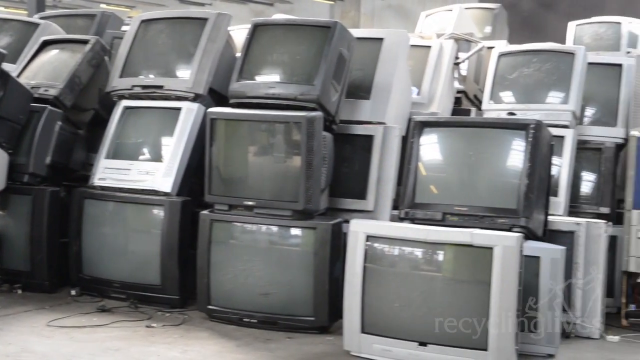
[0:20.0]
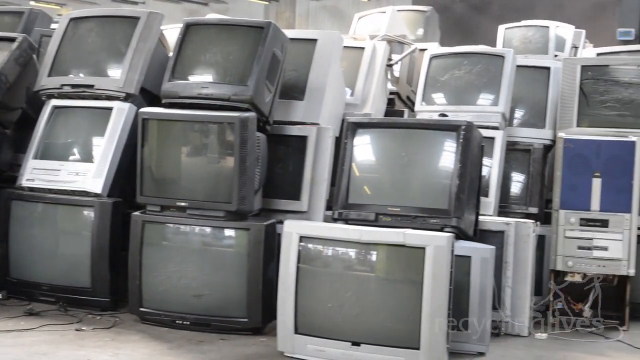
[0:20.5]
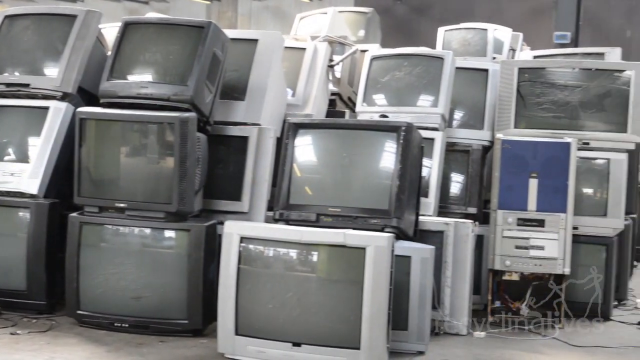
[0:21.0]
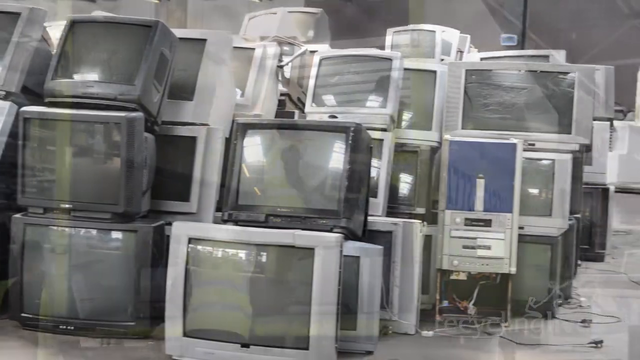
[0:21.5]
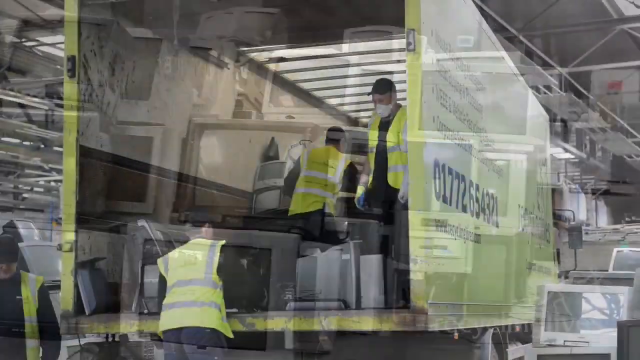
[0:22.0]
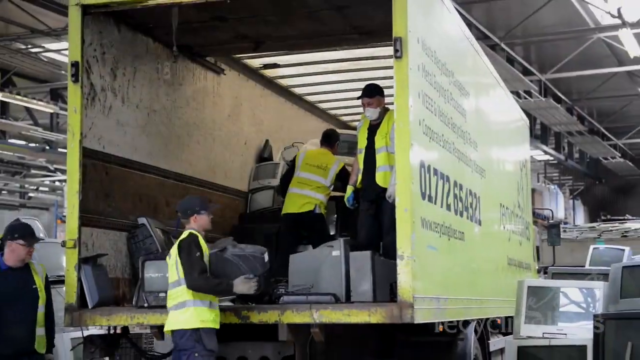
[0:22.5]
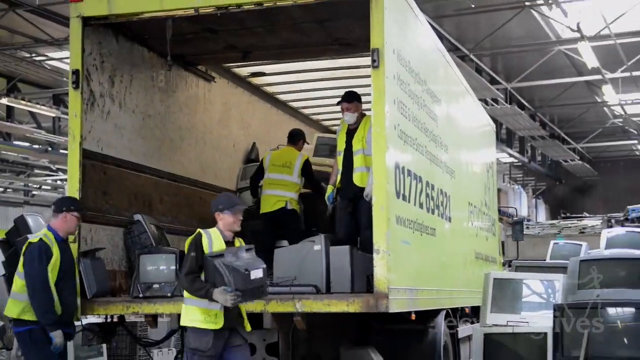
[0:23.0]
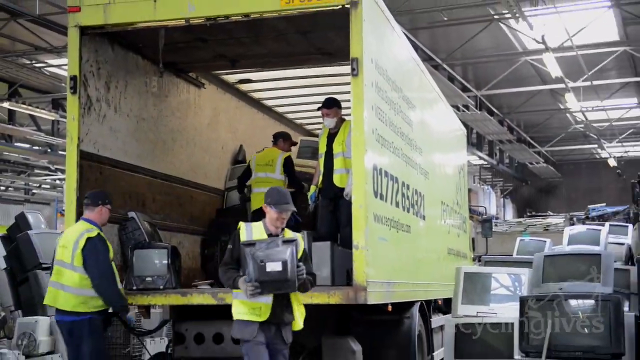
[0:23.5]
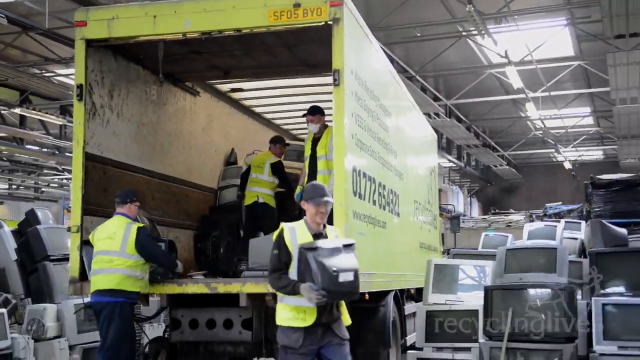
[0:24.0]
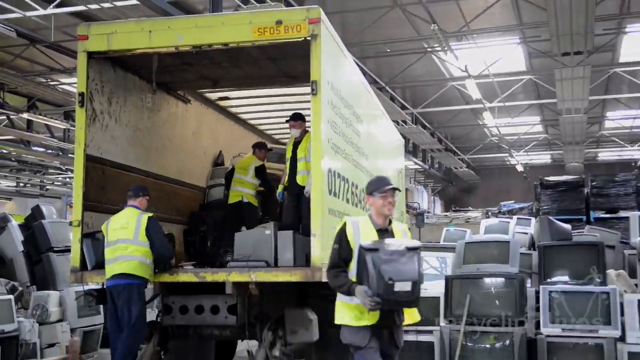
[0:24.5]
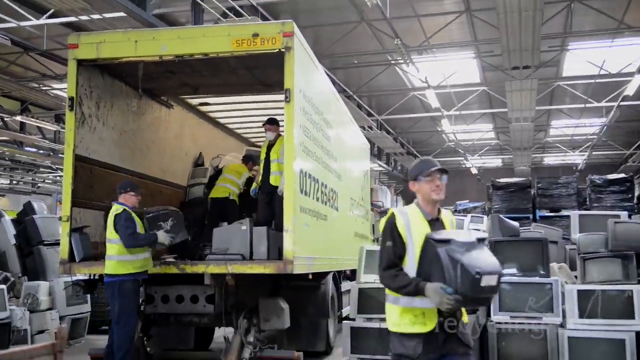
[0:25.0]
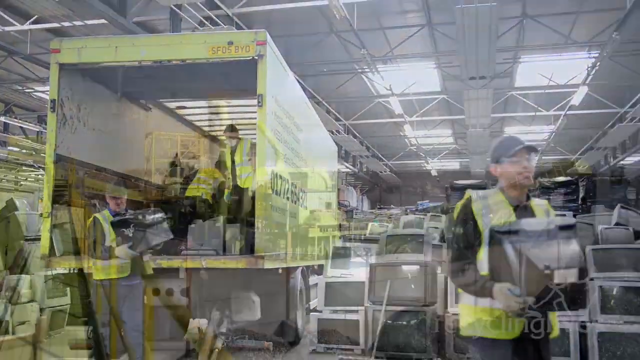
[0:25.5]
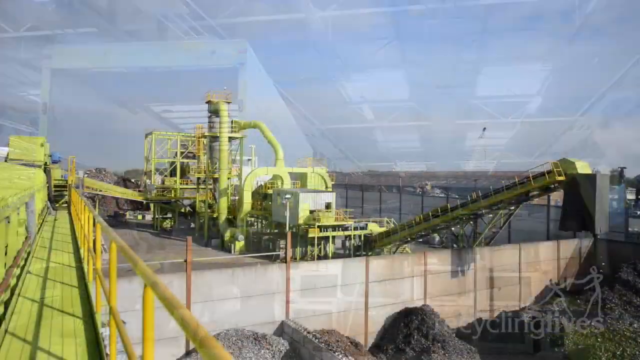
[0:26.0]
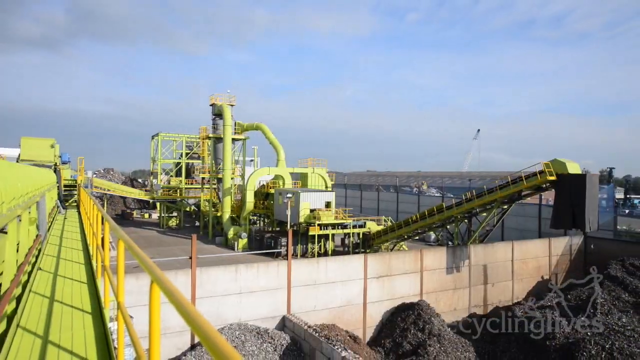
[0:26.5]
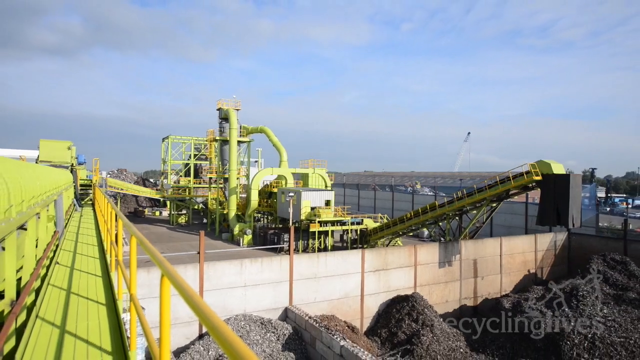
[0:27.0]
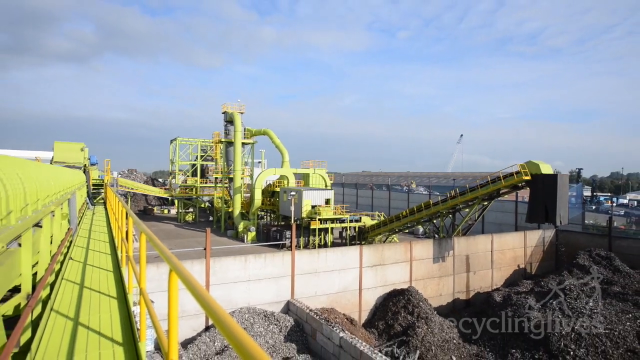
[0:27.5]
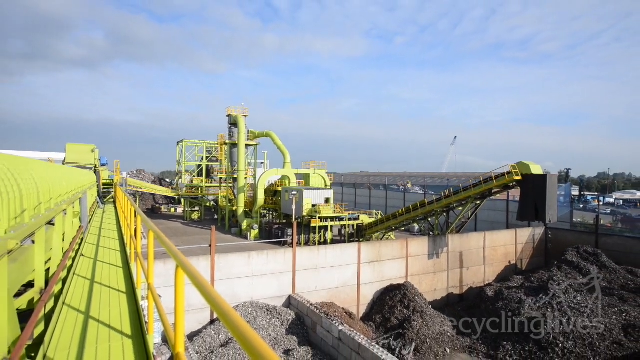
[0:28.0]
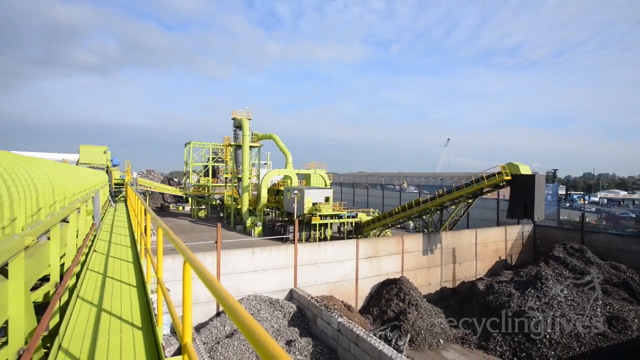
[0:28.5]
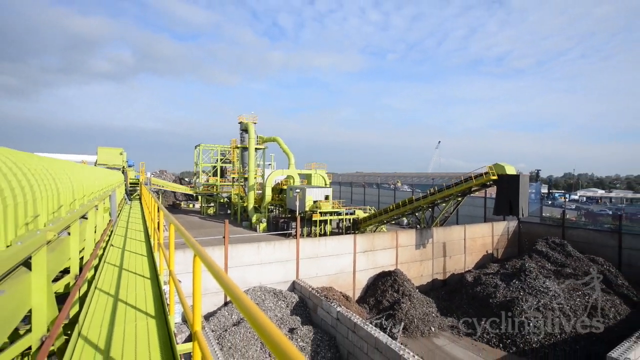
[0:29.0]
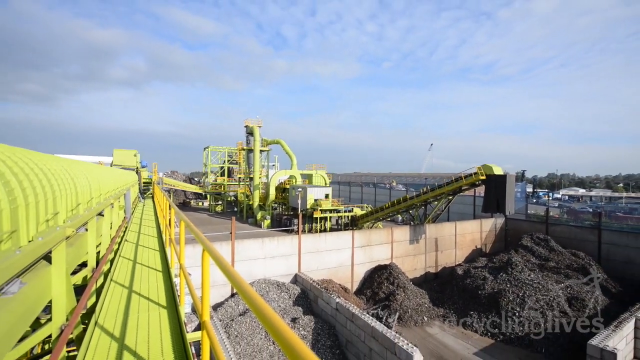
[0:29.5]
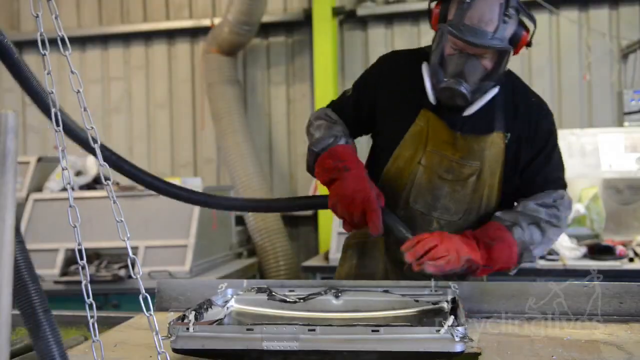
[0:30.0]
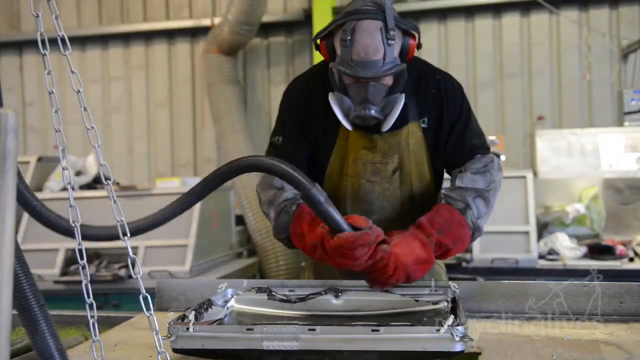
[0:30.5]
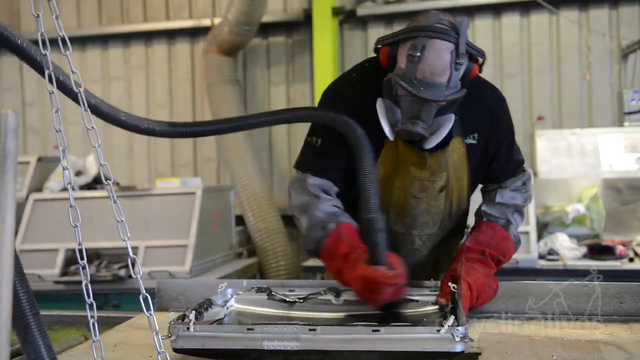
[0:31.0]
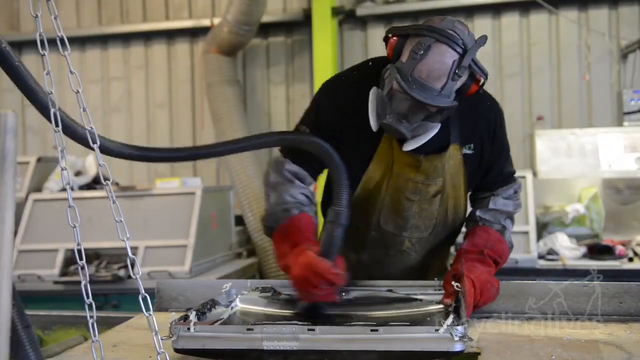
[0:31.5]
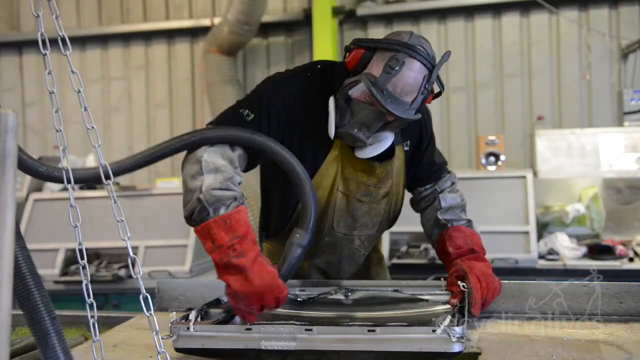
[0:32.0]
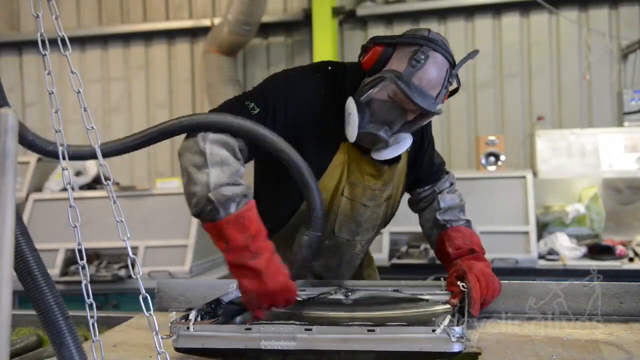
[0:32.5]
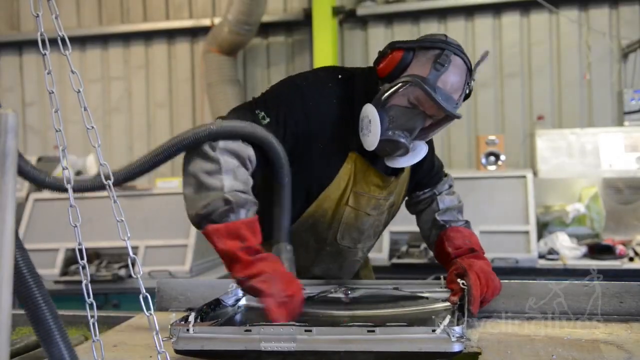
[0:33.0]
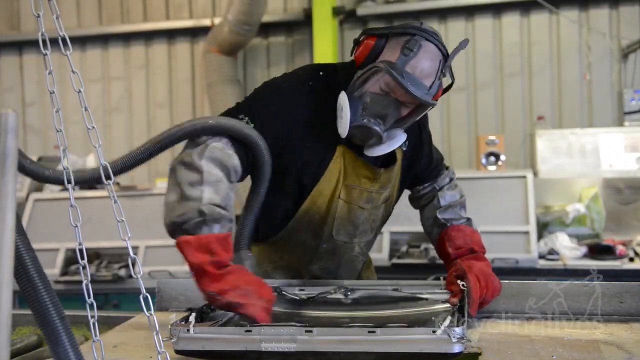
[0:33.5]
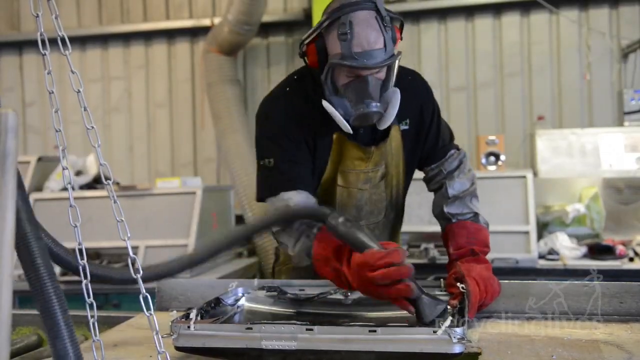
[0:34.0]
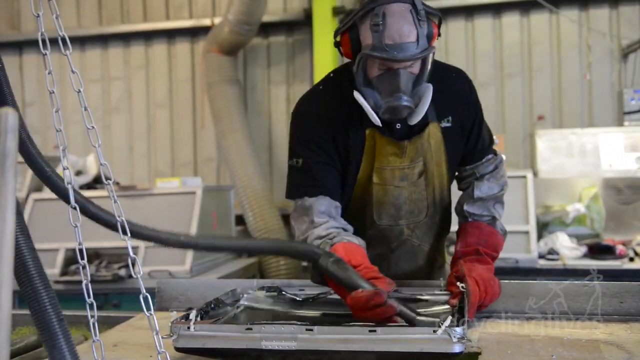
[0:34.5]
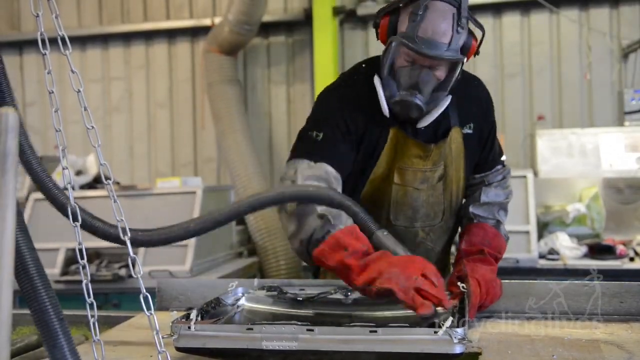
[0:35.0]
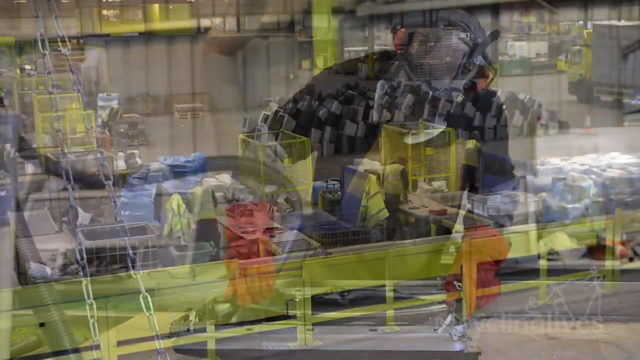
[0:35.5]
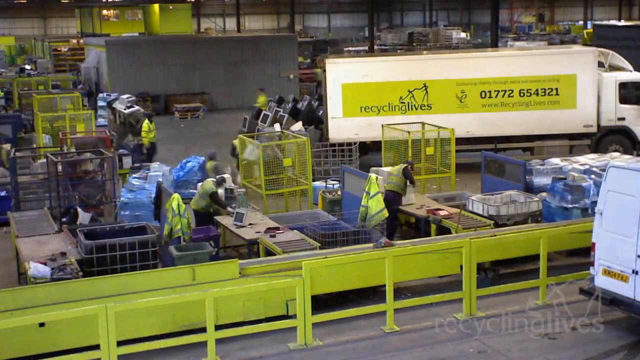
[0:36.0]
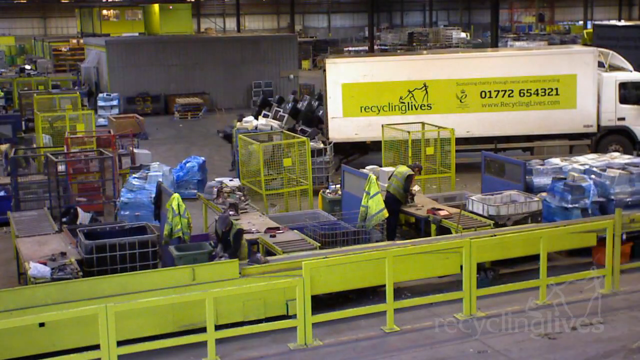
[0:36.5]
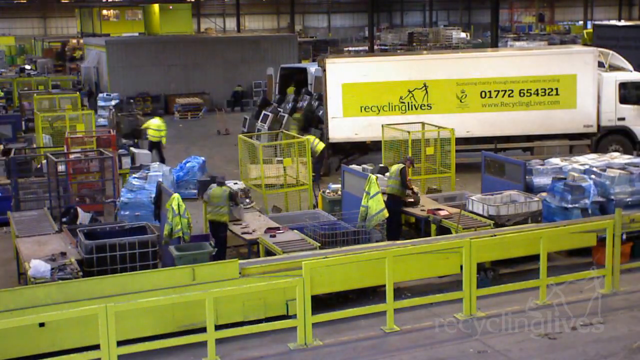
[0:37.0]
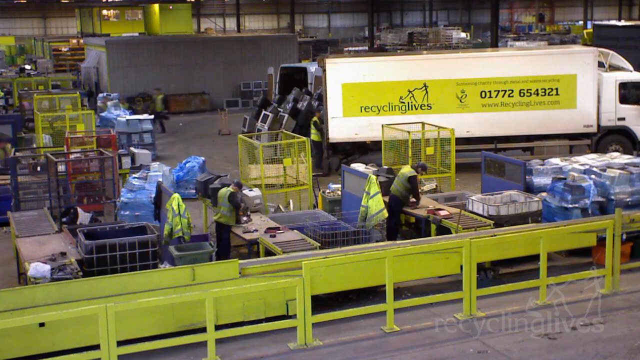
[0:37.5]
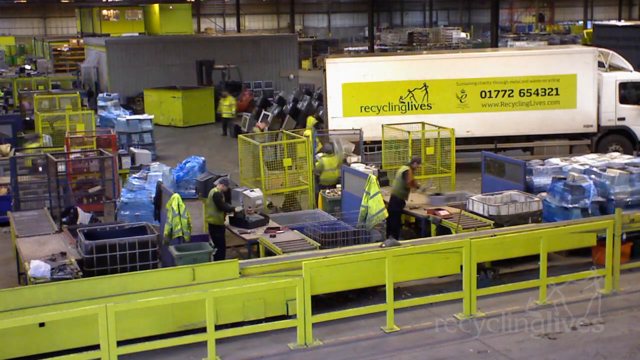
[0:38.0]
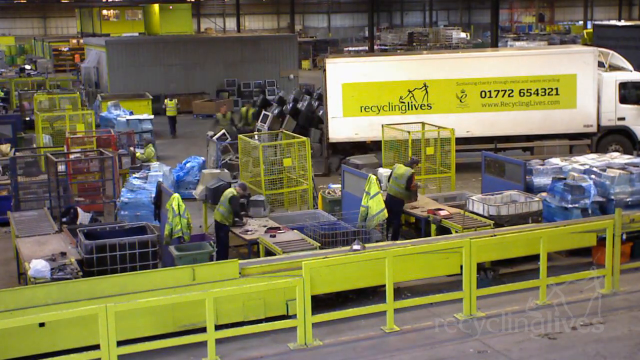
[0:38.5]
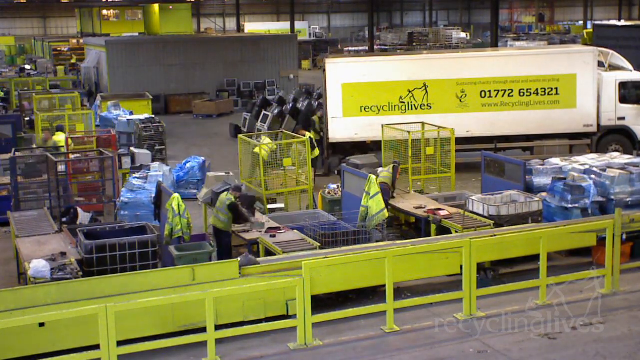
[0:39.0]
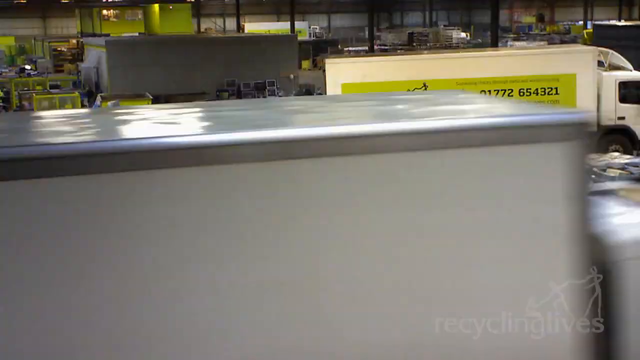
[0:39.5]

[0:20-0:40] In a black-and-white shot, the camera pans to the right across a bunch of TVs and TV monitors piled in a warehouse. Men in yellow and gray safety vests then appear to be loading TVs into a truck, or maybe taking them out; some of the men are still inside the truck while a couple of others walk around, and they carry the TV sets away. Next, outdoors under a blue sky with gray clouds, there is some kind of yellow machinery, with what appears to be railing, maybe a walkway, to the left, also painted bright yellow. The machinery has a black tube with a nozzle at the end and dumps small black debris that looks like sand into a giant pile; it is not clear what the material is. Then a person wearing a gas mask, a yellow safety apron, silver and red gloves and a black long-sleeve shirt uses some kind of hose, wiping it across the surface of something unclear, possibly cleaning it; it may be the inside of a TV. Another shot of the warehouse shows men and women moving around, all wearing yellow and gray vests, and a white truck with a yellow sign on its side.